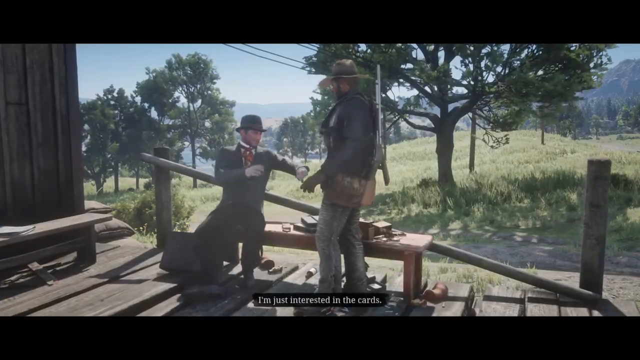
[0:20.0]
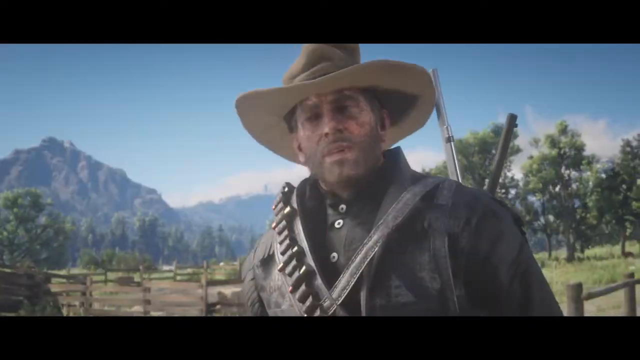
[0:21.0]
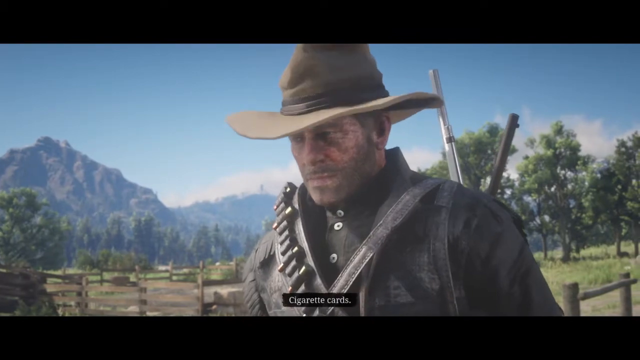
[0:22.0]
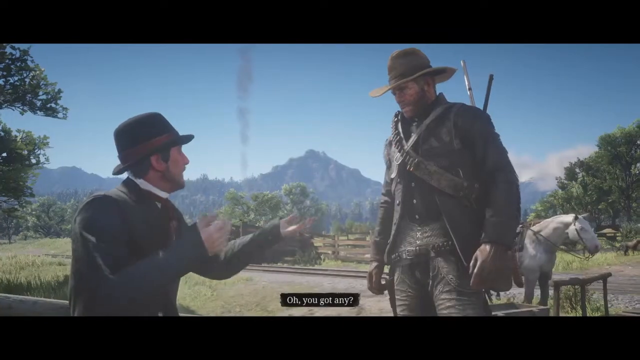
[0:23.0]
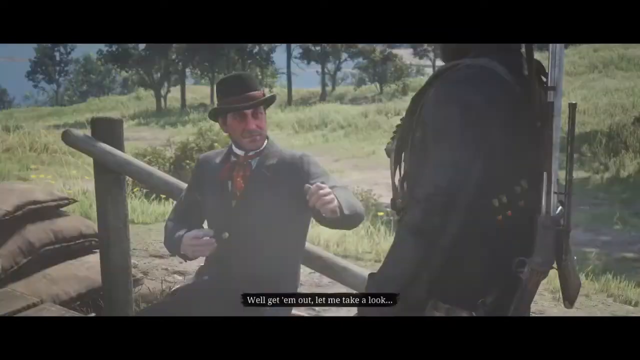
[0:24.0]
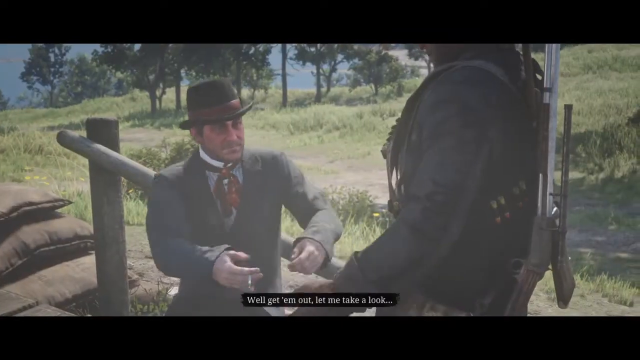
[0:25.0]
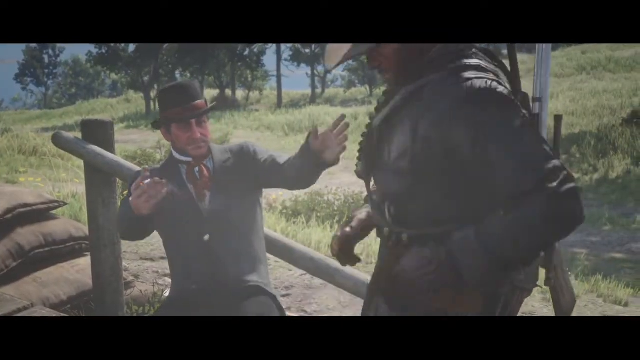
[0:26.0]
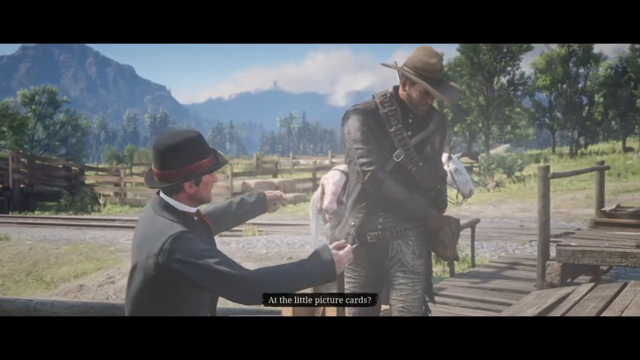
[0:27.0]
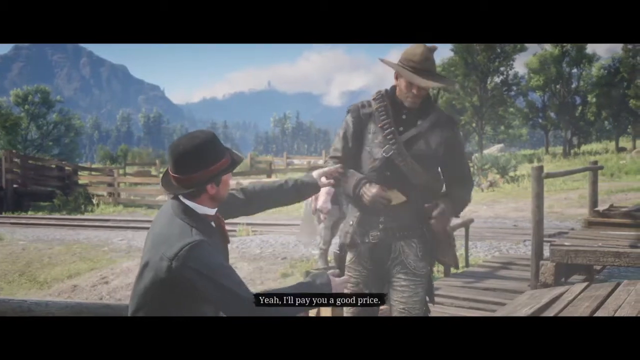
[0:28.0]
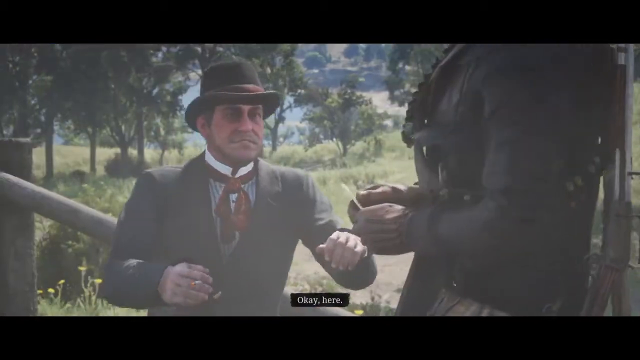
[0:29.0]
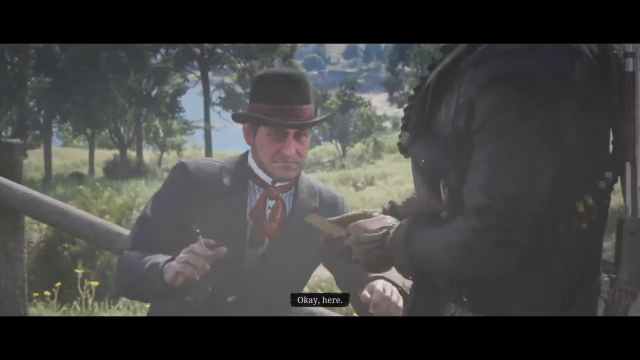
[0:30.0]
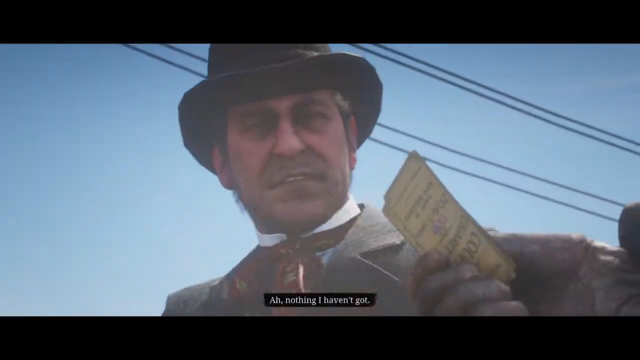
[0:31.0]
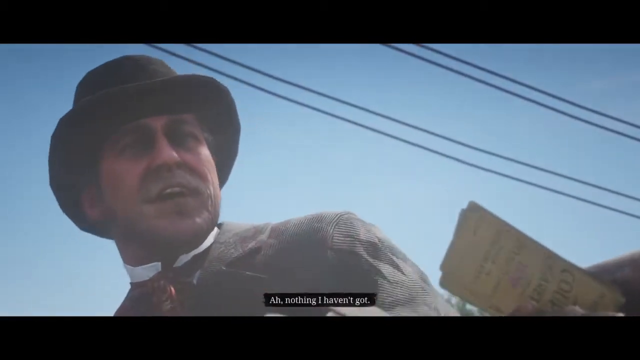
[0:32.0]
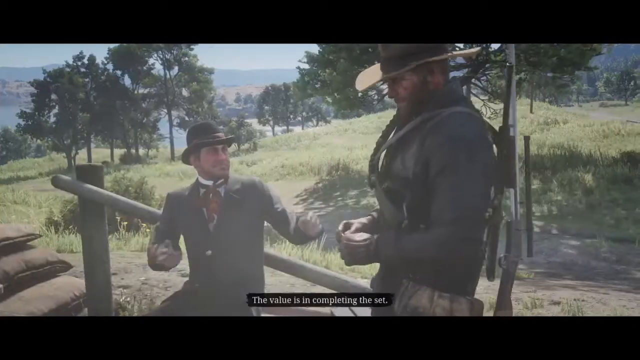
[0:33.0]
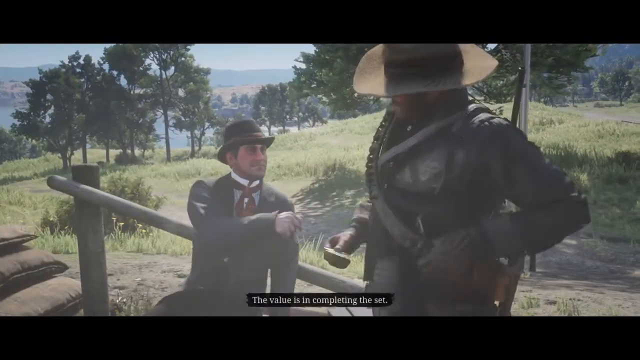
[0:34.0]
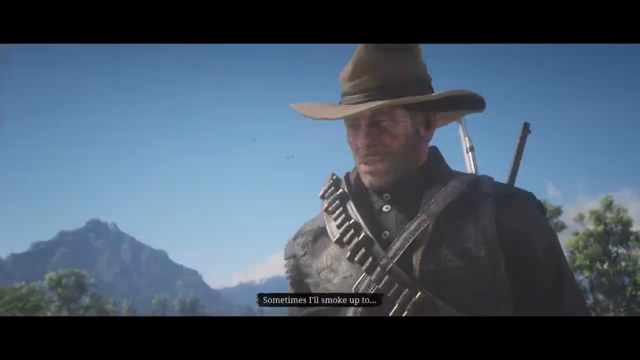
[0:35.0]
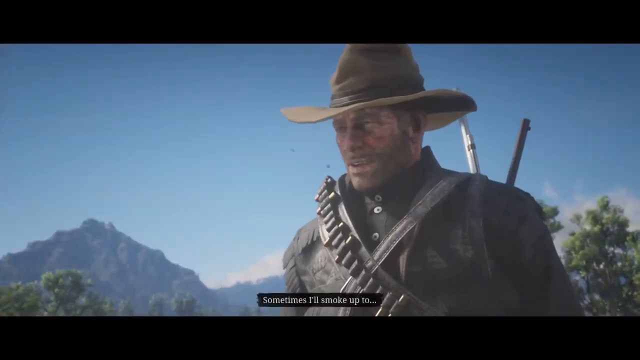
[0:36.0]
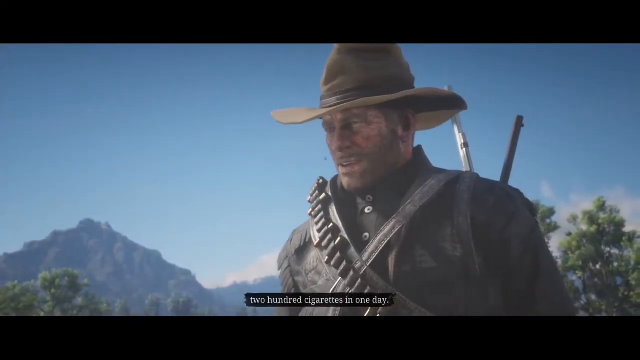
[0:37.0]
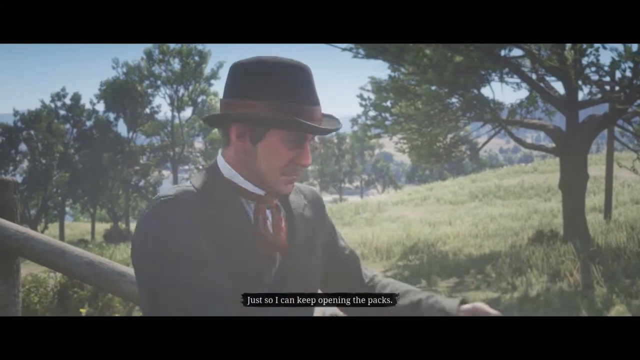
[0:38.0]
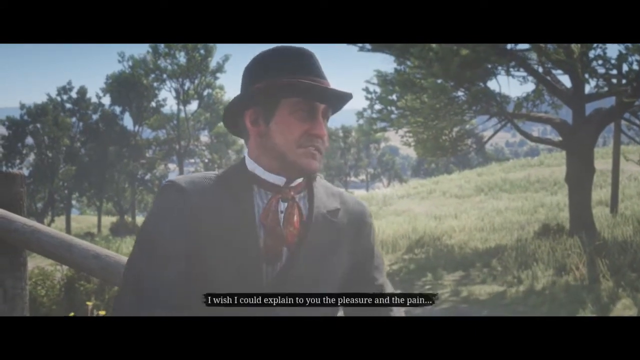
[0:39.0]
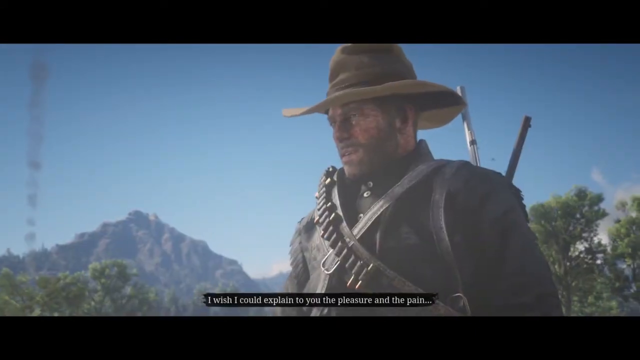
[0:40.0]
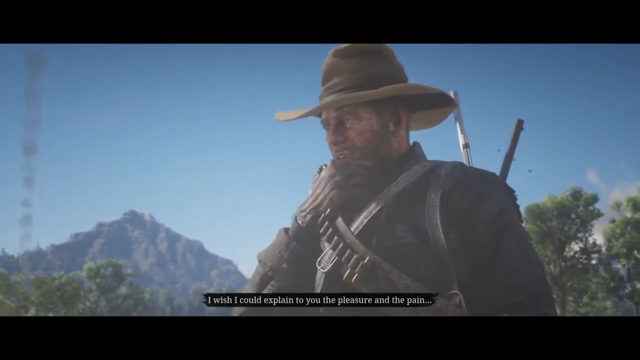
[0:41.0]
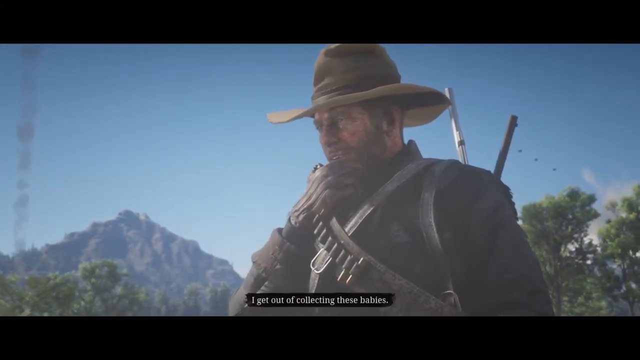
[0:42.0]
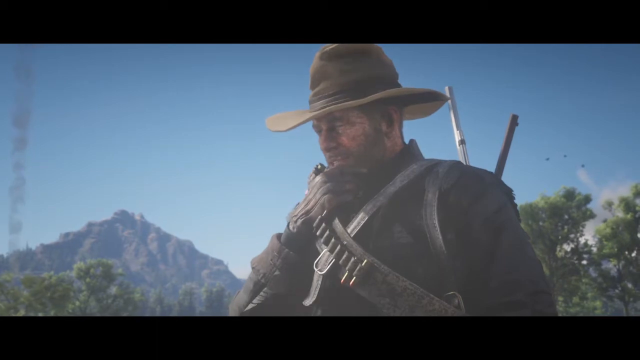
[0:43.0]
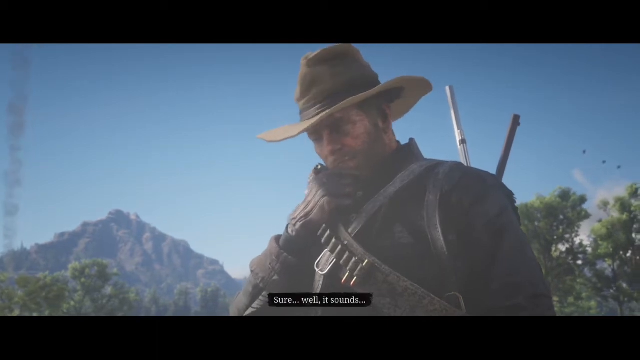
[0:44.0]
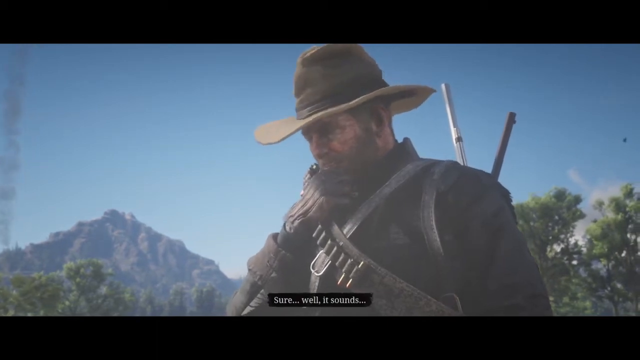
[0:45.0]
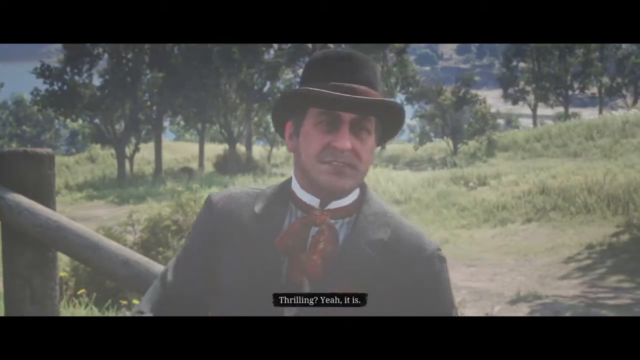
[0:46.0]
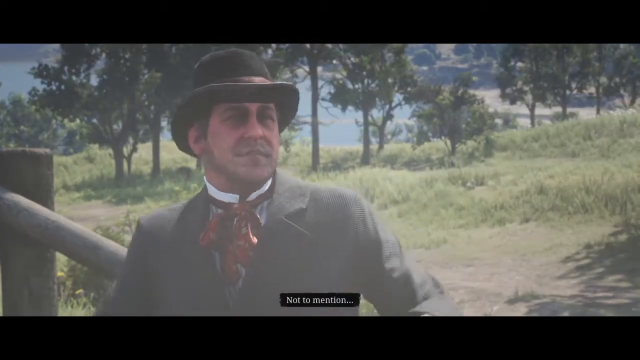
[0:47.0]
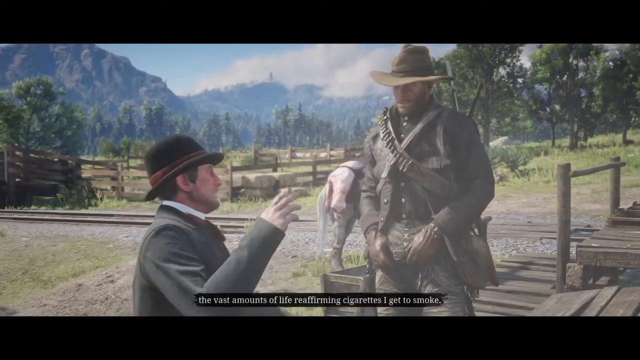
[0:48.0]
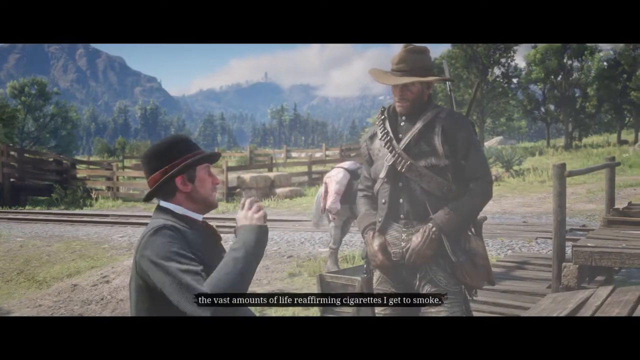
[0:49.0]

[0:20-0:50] The man on the bench and the man in the cowboy hat continue their conversation about cigarette cards. The man hands over the cards and says, "oh nothing I haven't got." The man has a large gun on his back and rounds of bullets on a sash around his body. The man with the top hat says that sometimes he smokes 200 cigarettes in one day, just so he can keep opening packs.